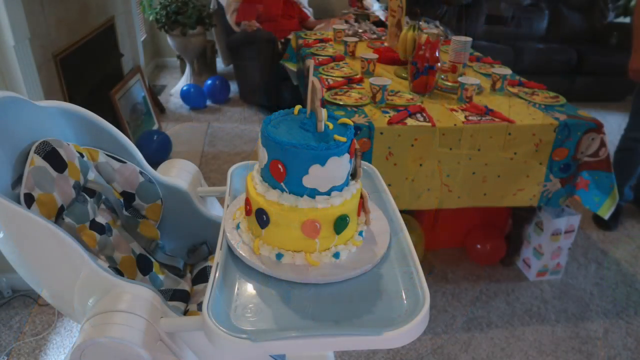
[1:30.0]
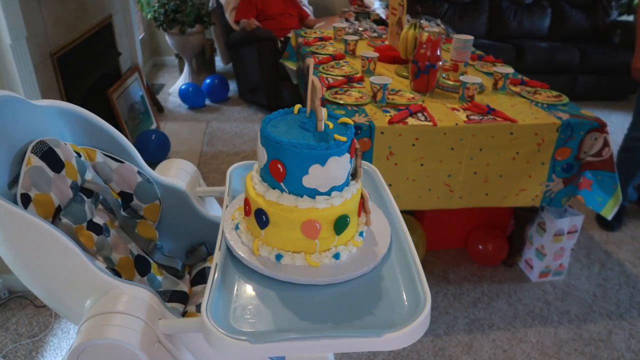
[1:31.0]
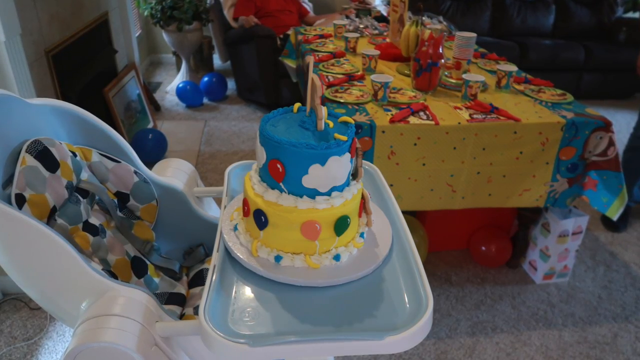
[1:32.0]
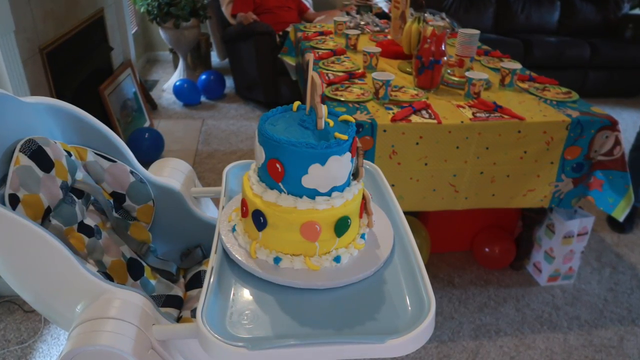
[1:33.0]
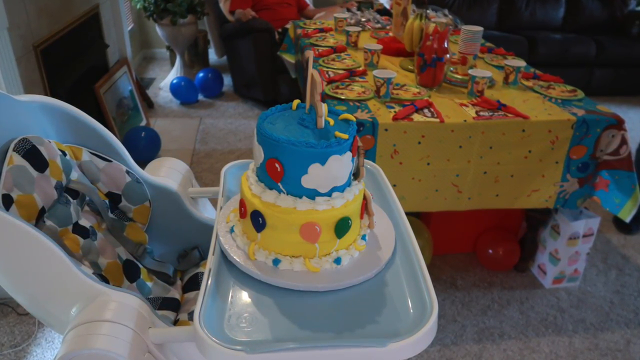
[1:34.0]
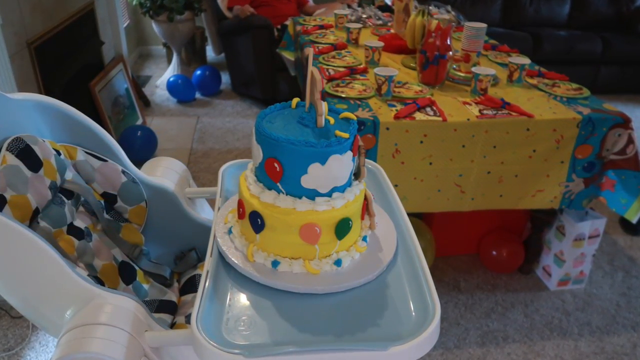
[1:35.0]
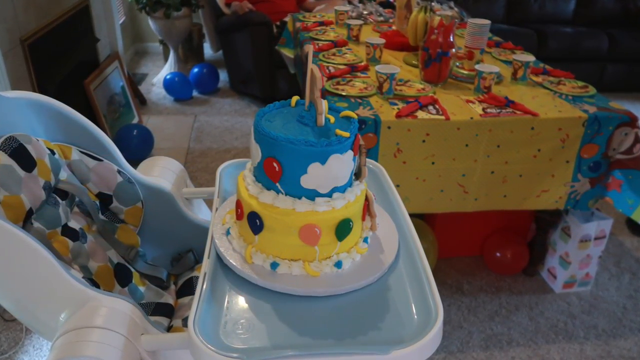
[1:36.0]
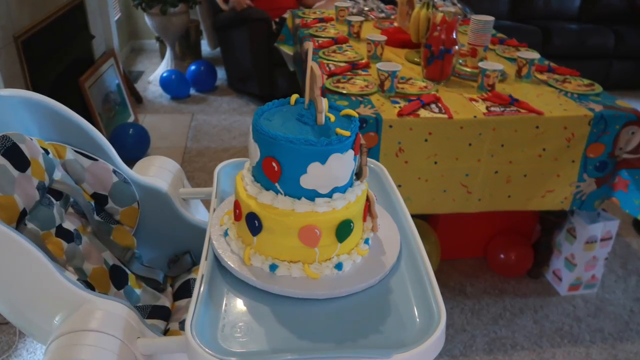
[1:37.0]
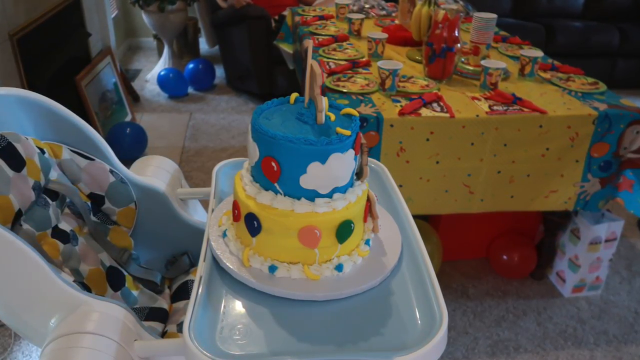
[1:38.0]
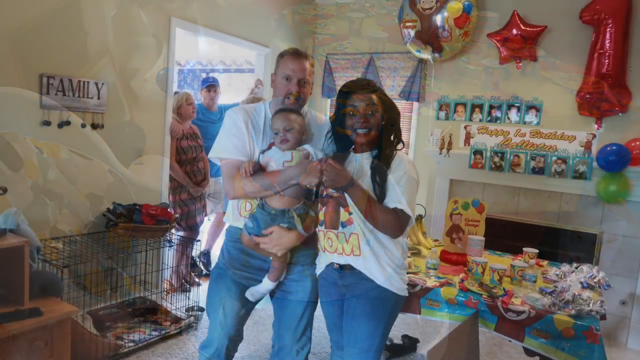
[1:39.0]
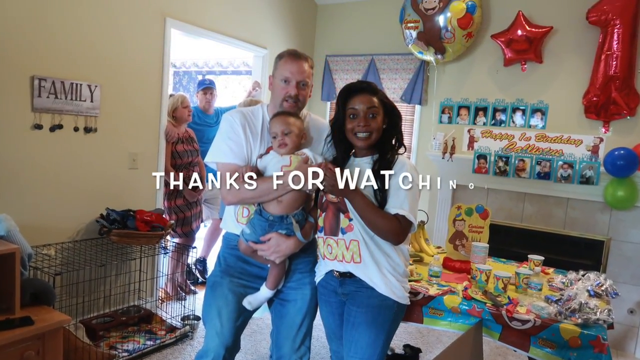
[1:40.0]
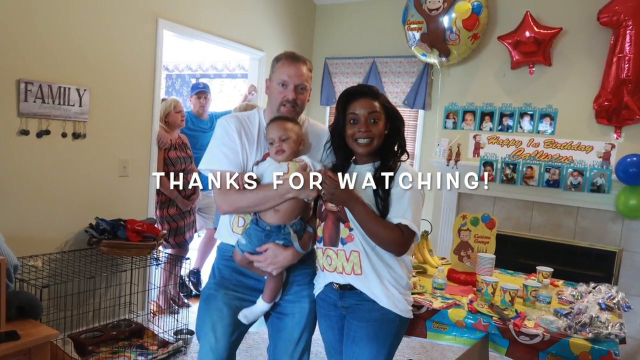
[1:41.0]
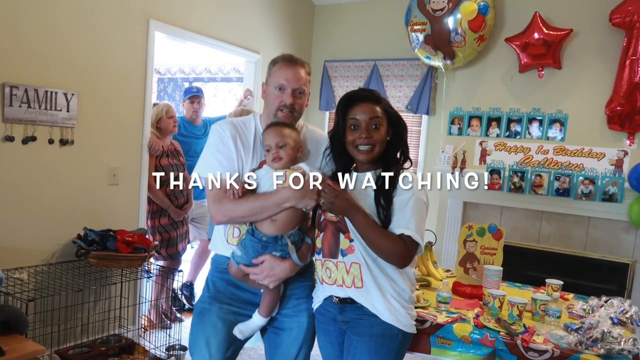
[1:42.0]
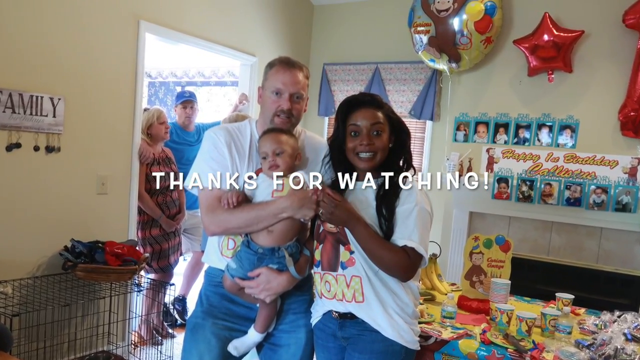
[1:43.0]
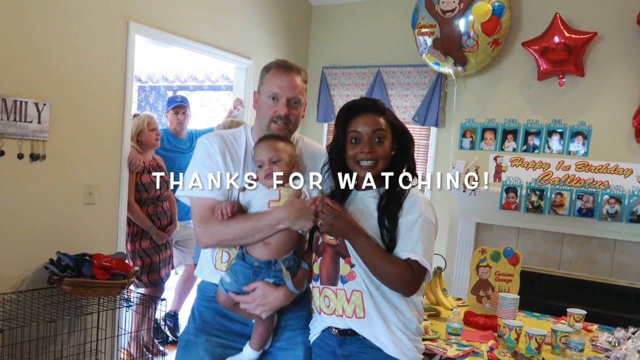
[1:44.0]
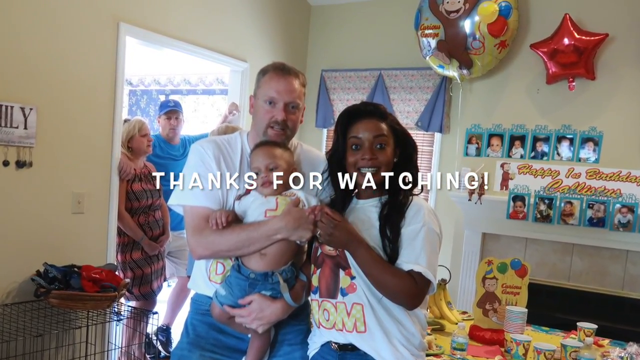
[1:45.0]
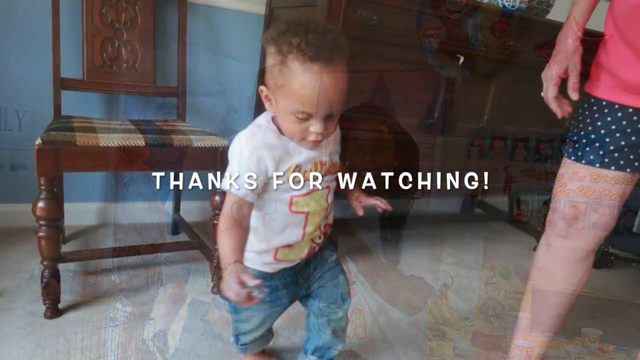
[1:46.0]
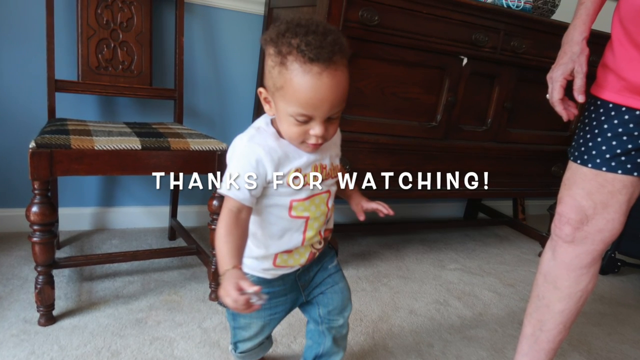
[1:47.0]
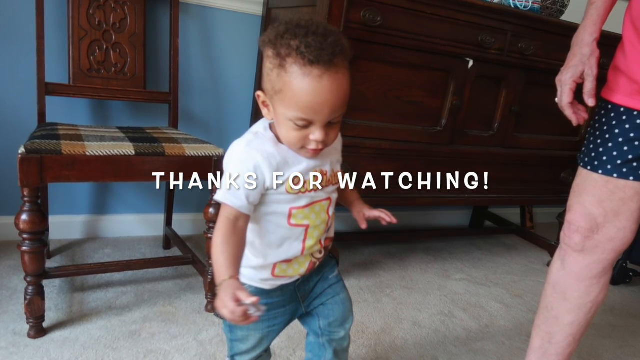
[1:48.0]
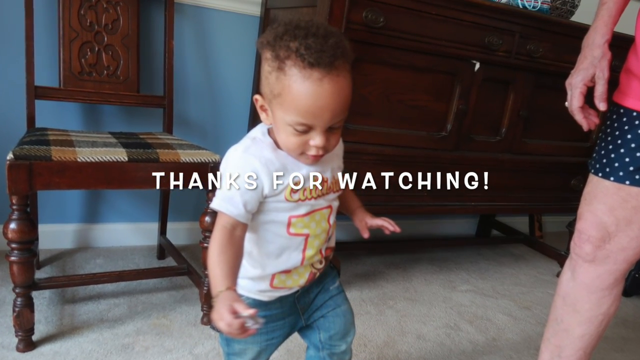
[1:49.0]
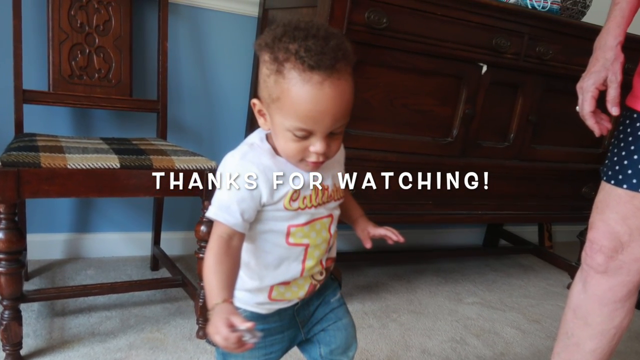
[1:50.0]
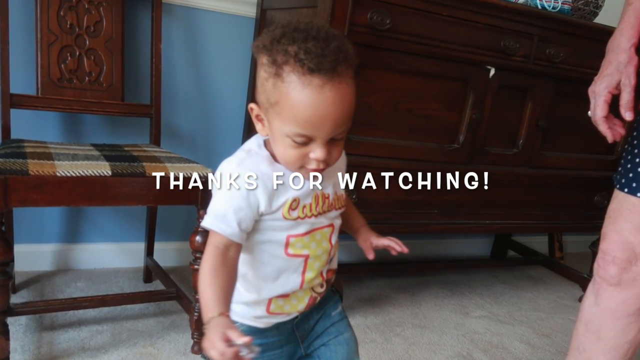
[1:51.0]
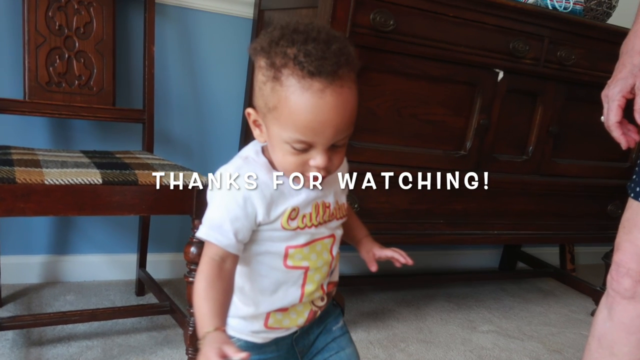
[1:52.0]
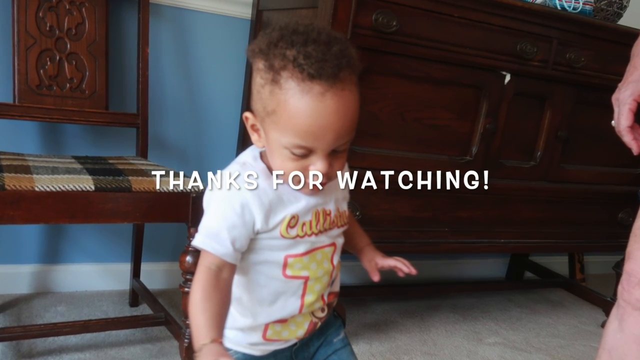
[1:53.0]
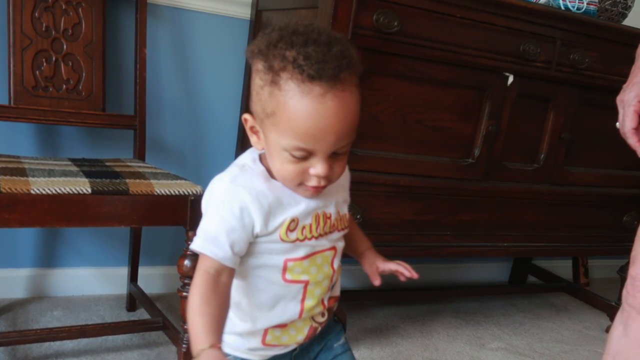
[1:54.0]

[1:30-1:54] The cake shows its two layers, blue on top and yellow as the first layer, sitting in the baby's high chair on his table. The next shot is apparently an image of the mother and father. The mother is a dark-haired African-American woman, probably in her late 20s or early 30s. The man, probably in his early to mid 30s, is white with a goatee, a receding hairline and brown hair, and he is holding the baby, who is kind of looking away from the camera. Text across the image says "thanks for watching!" Another couple is in the doorway or entryway to the room: a blonde woman wearing kind of a brown dress, and a man in the back wearing kind of a brown baseball cap and a blue shirt. It is unclear who they are talking to, possibly someone out of view behind the father. To the left is what appears to be a cage for a young dog, with a sign above it that says "family". The camera slowly zooms in on the family's faces.